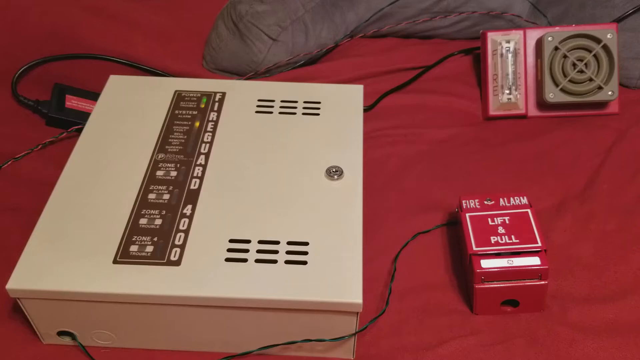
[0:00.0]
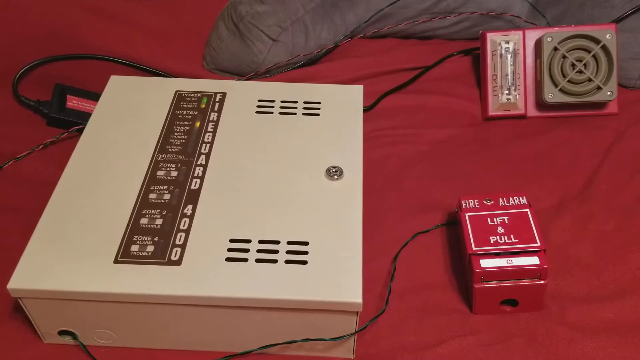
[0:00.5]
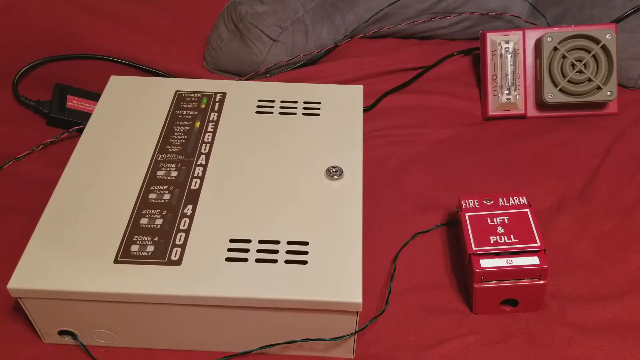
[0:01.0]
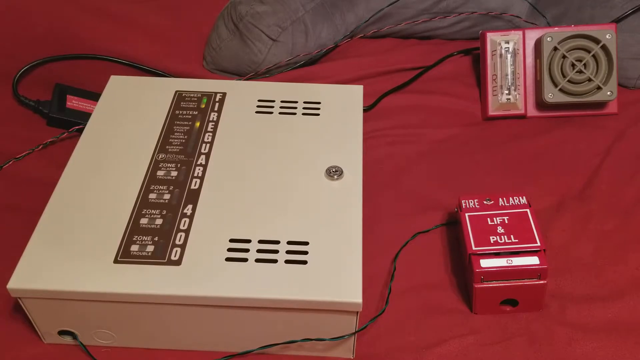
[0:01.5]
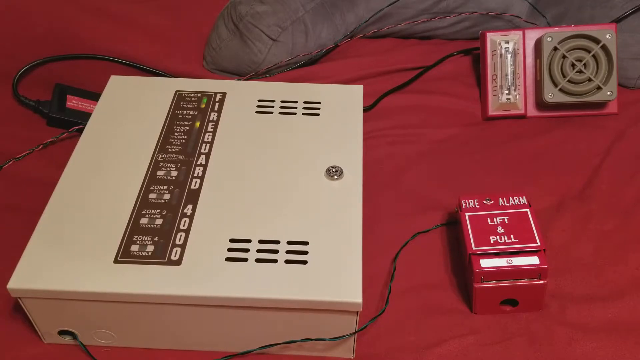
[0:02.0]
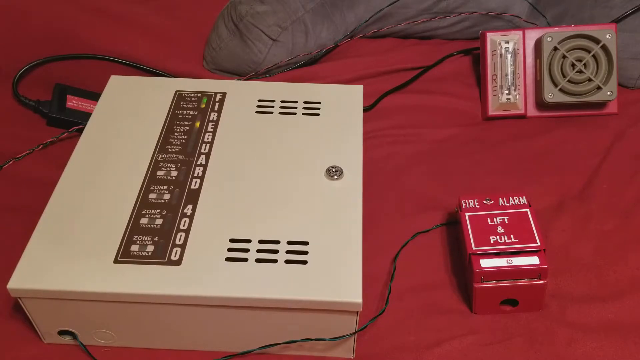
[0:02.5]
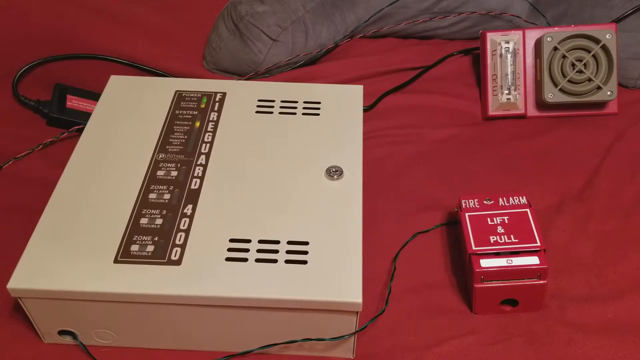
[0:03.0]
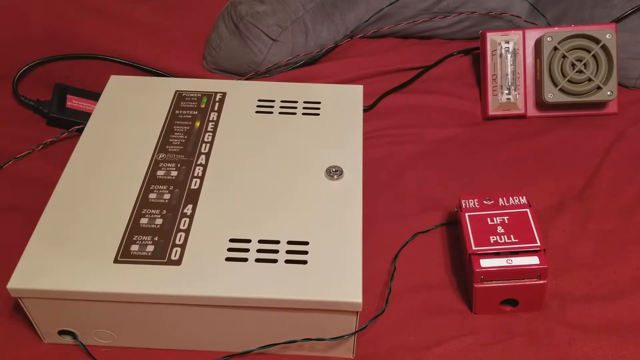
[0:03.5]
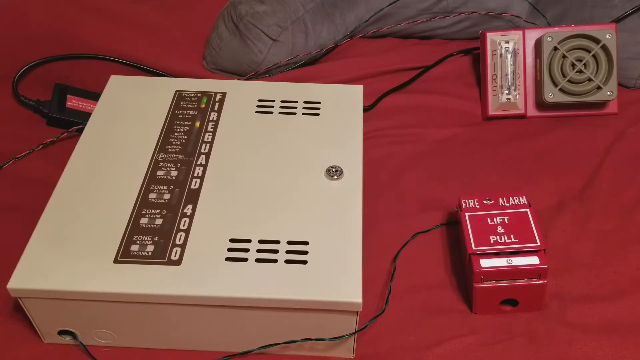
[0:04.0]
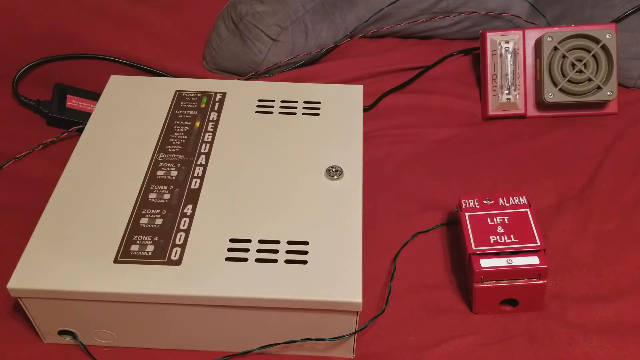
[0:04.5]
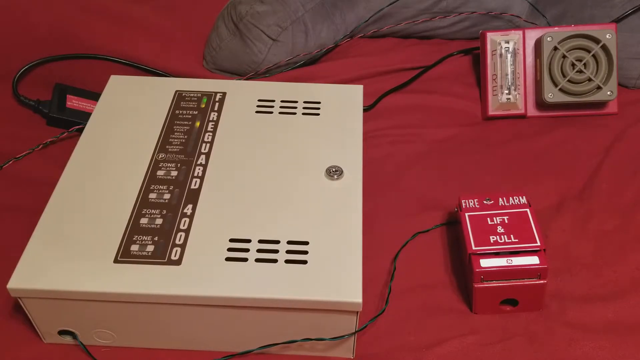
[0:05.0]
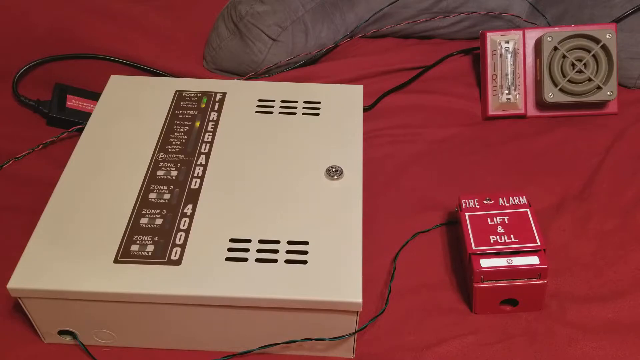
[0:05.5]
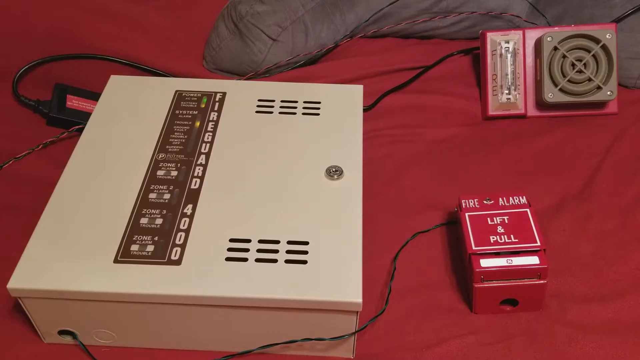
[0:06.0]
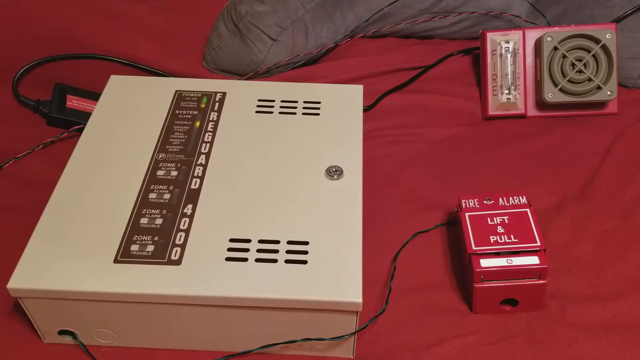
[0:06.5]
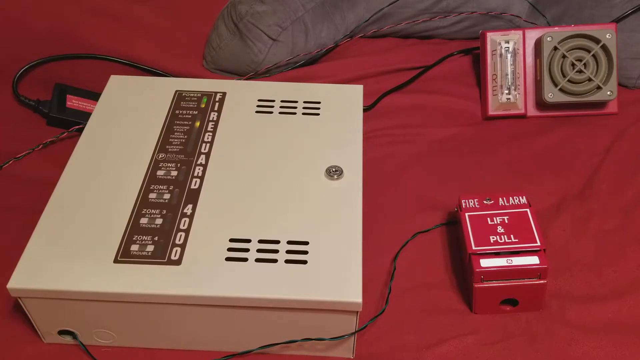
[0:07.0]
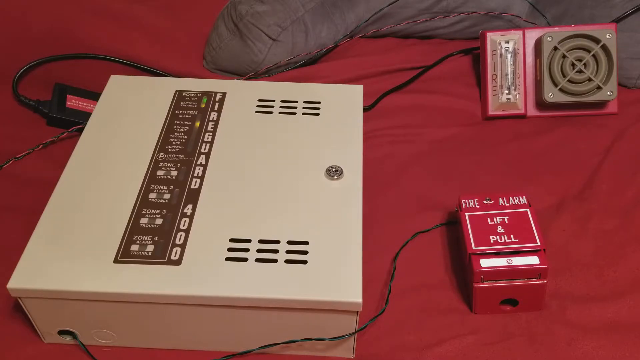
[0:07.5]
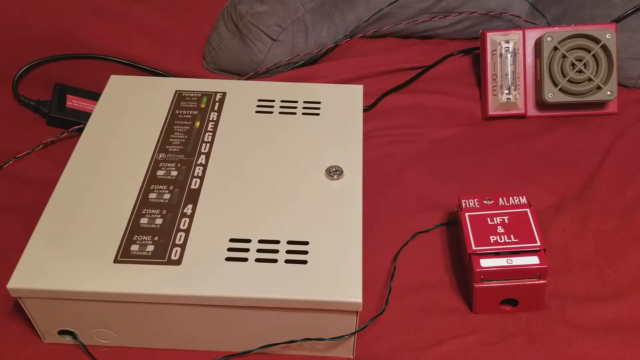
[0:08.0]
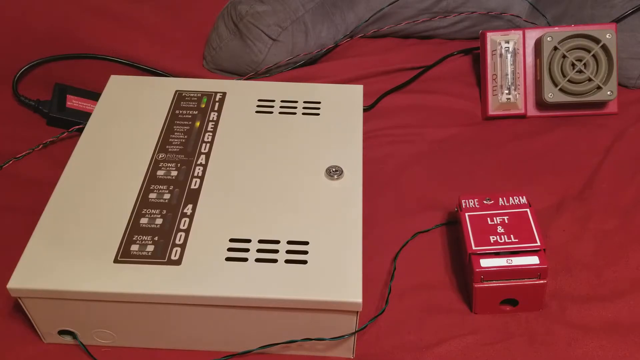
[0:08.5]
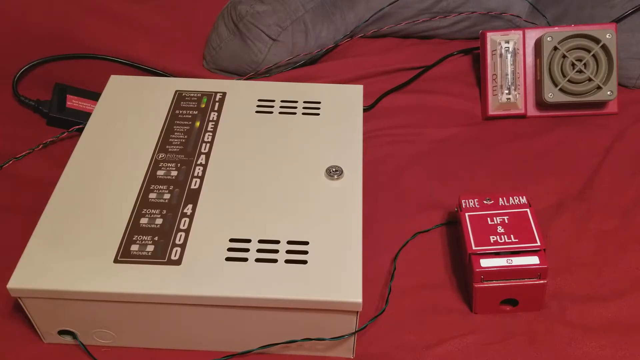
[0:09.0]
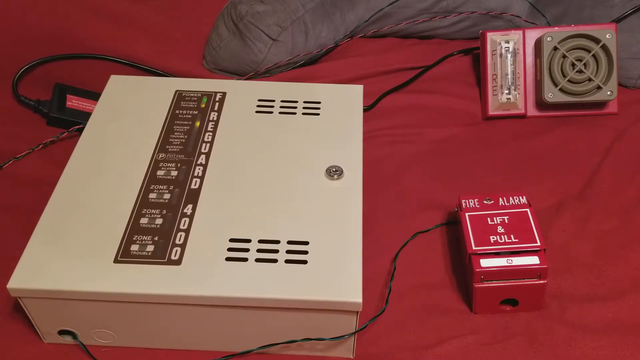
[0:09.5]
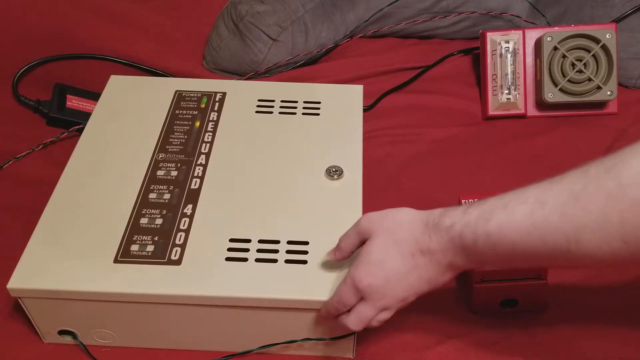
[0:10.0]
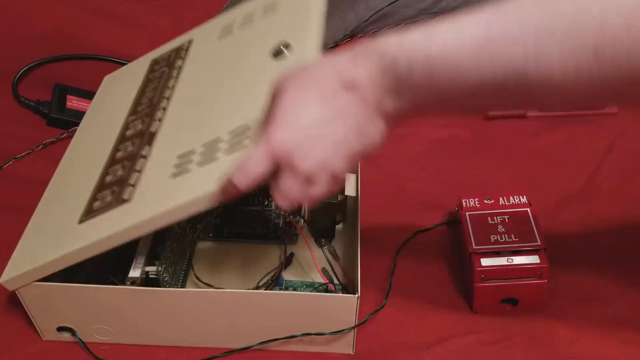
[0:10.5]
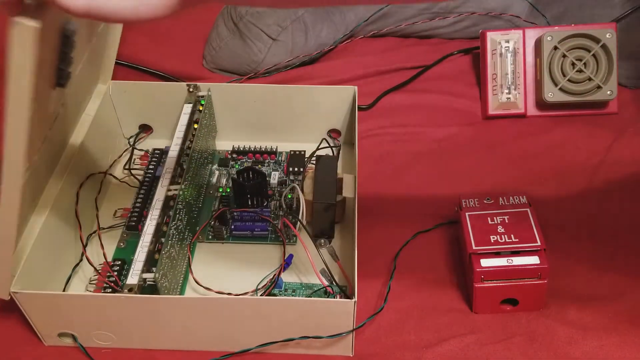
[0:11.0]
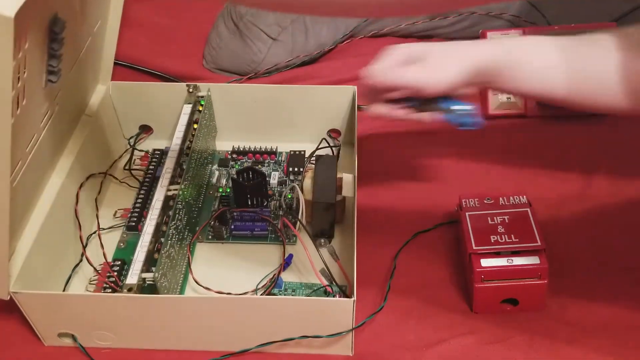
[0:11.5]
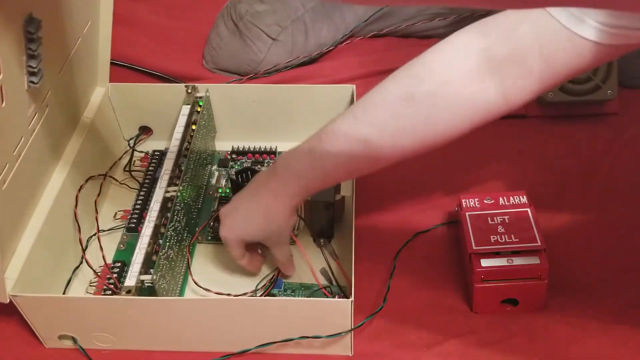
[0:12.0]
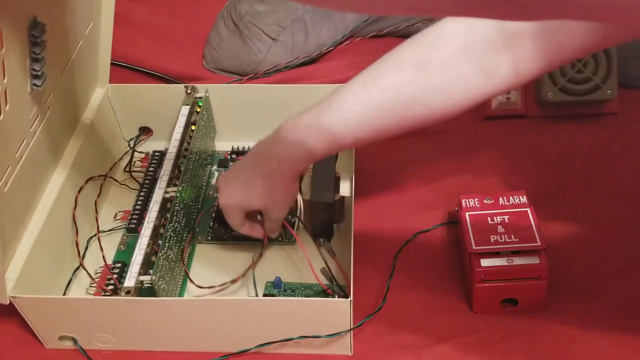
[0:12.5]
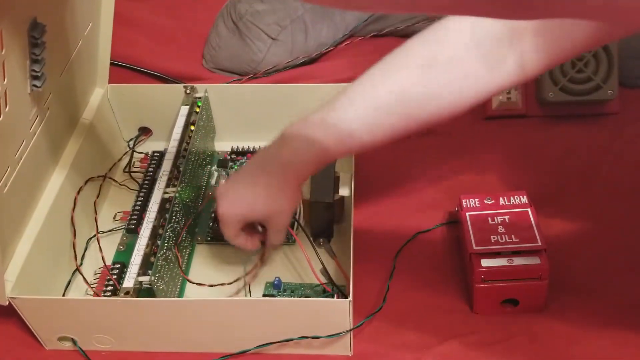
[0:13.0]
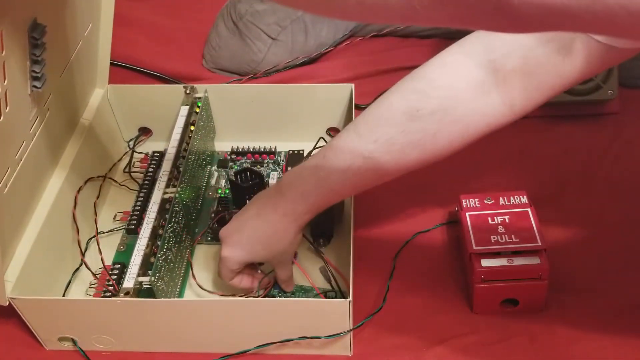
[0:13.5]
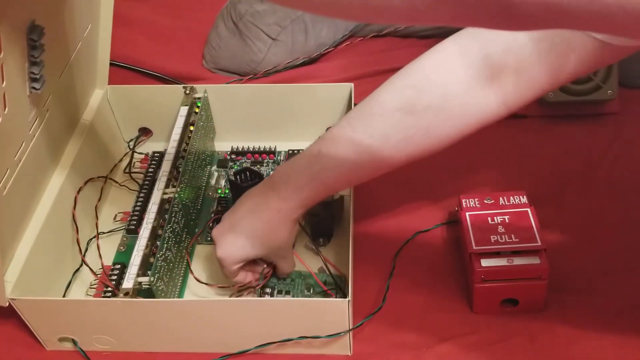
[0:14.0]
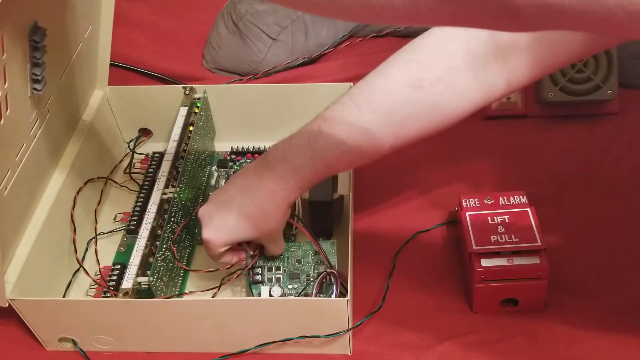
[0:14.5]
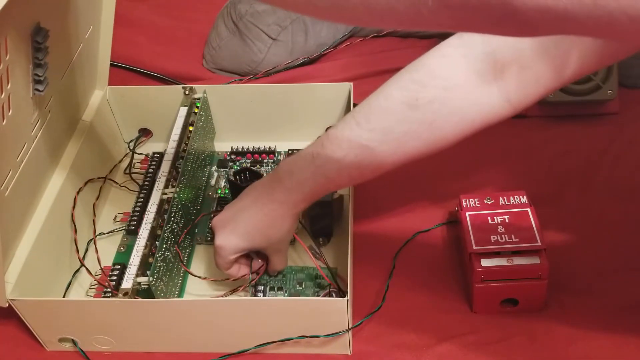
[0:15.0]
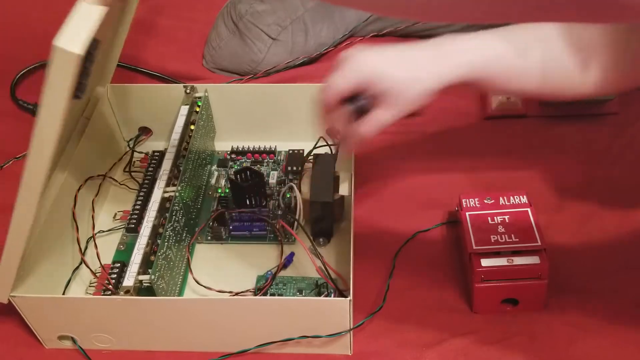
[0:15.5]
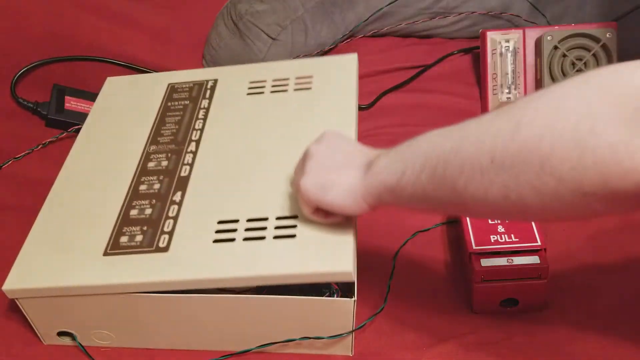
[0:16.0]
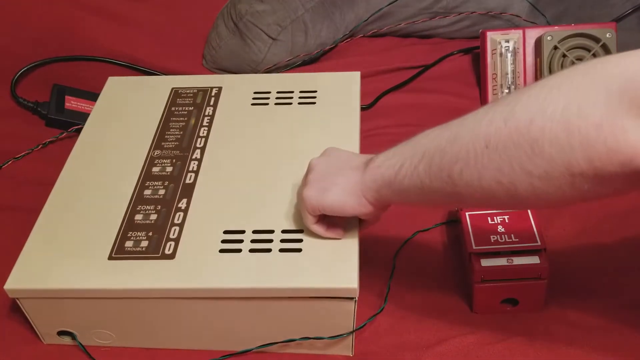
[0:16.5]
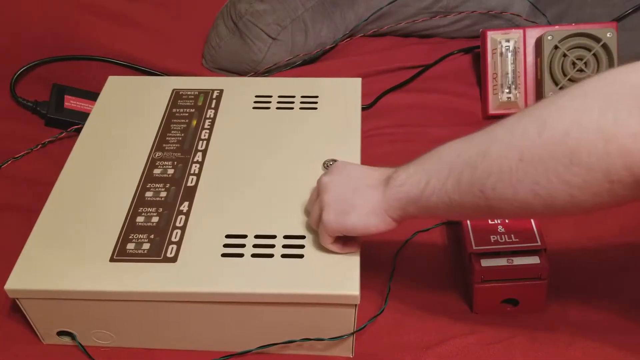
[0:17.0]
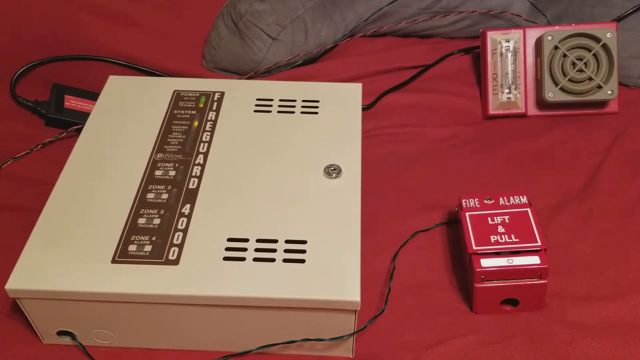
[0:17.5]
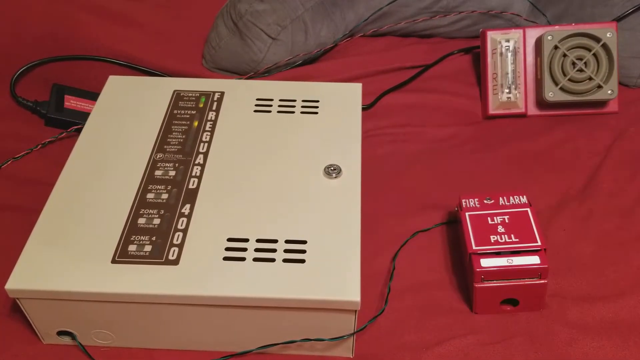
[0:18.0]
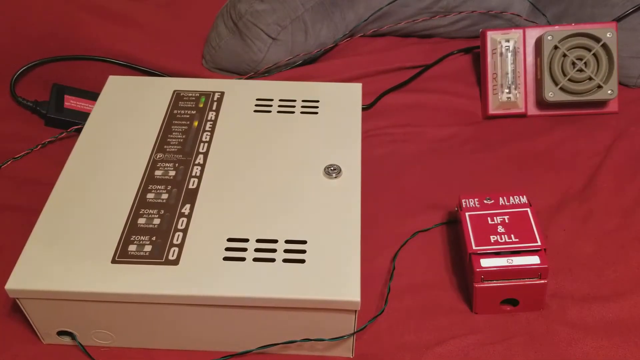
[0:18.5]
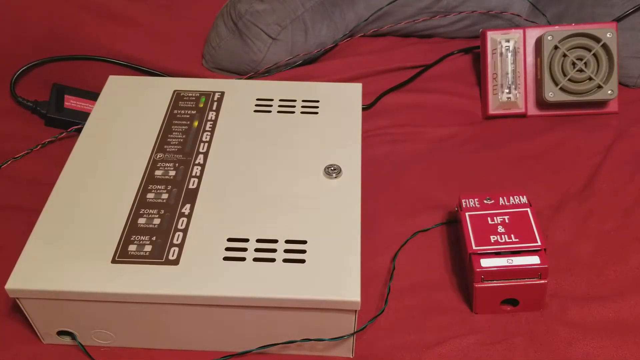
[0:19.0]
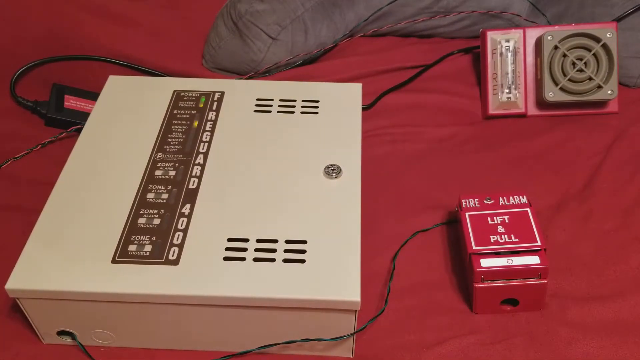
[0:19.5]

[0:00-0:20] A fire alarm system is shown. On the left is a large beige metal box with a vertical sticker in the middle reading "FireGuard 4000," with some instructions to the left of that name. To the right of the metal box is a red lift and call fire alarm box, attached to the larger beige box by a black wire. Just above that is the red fire alarm itself that emits the sound, also attached to the main box by a wire. Everything is on a red blanket or sheet of some sort. Flashing lights slowly start to appear on the FireGuard 4000 main box. A left hand enters the frame from the right and opens the beige box from the right, lifting the lid to reveal a series of wires, components and electrical boards inside. The hand lifts up one of the components and shows it to the camera before closing the box again.